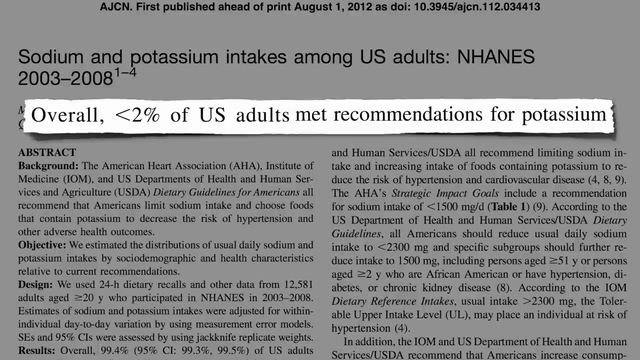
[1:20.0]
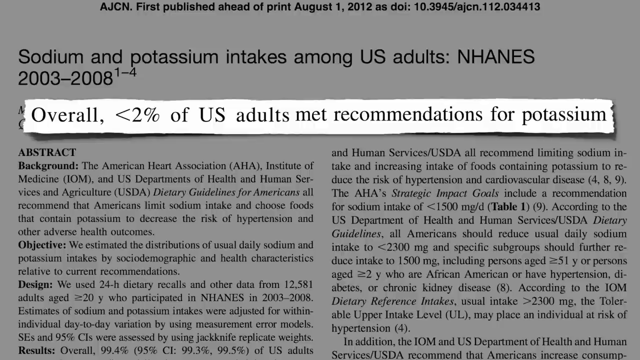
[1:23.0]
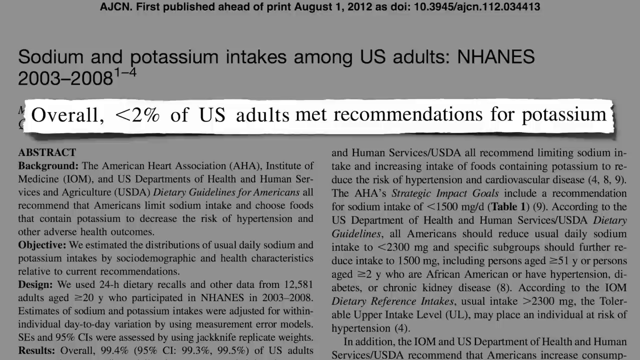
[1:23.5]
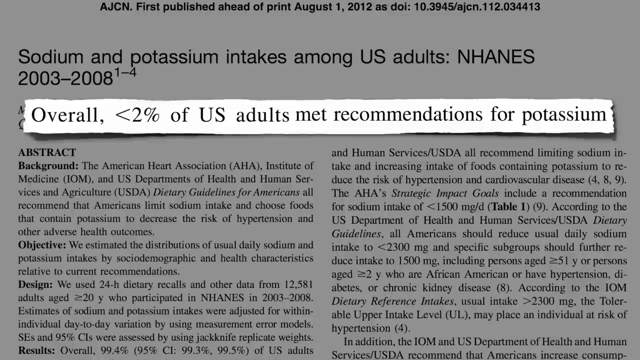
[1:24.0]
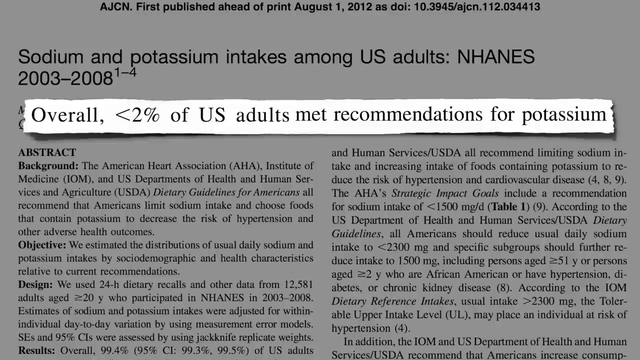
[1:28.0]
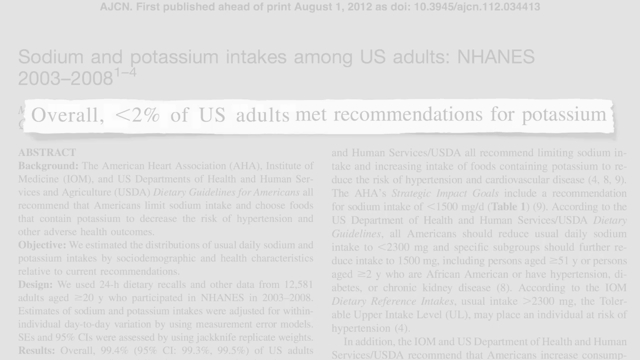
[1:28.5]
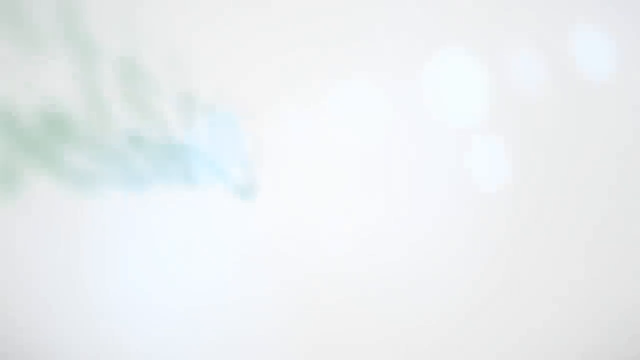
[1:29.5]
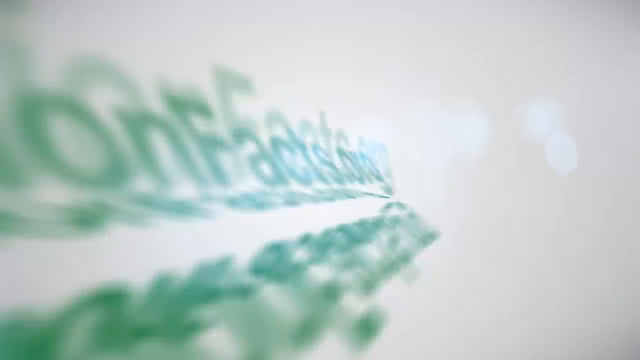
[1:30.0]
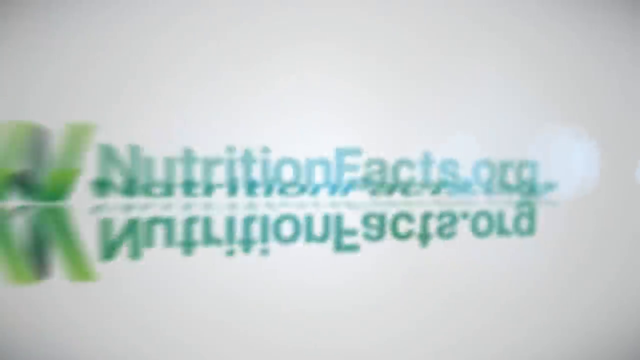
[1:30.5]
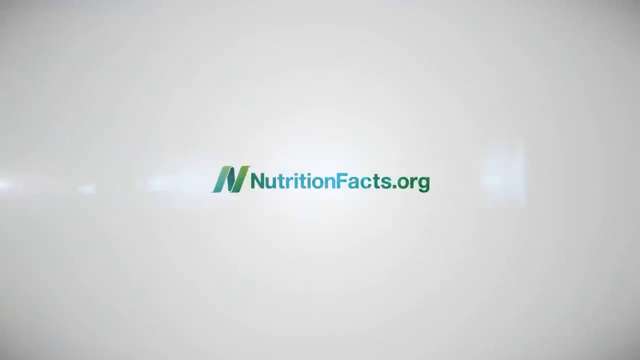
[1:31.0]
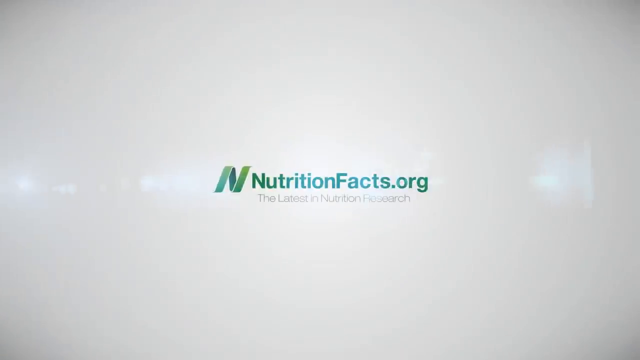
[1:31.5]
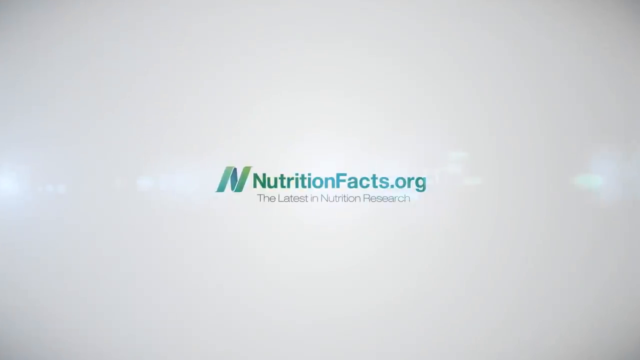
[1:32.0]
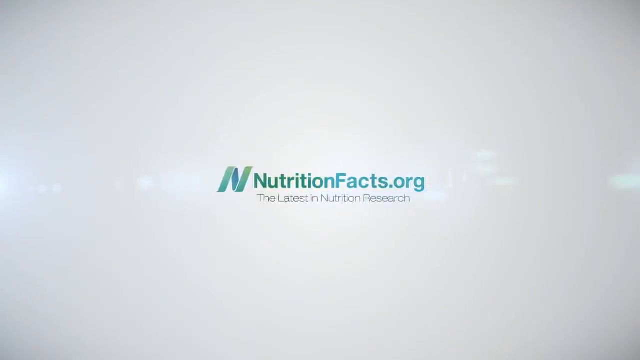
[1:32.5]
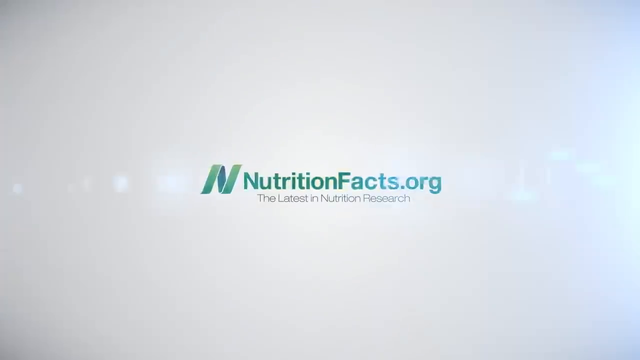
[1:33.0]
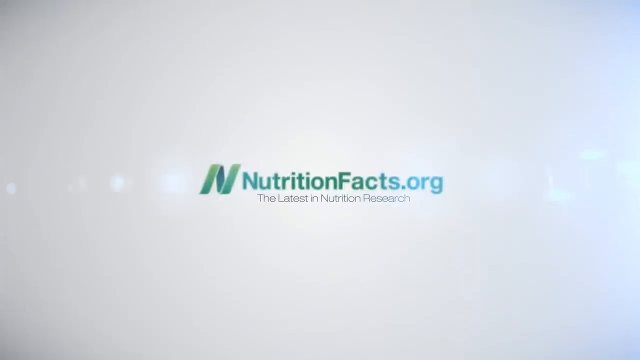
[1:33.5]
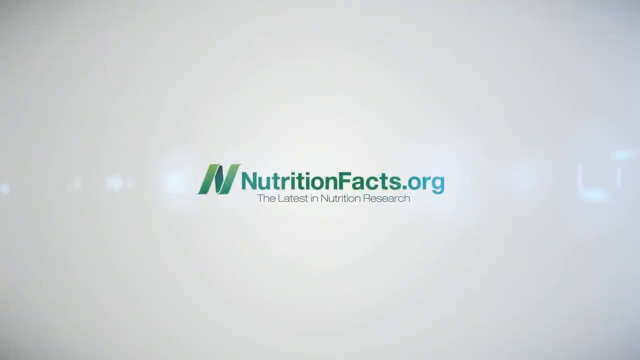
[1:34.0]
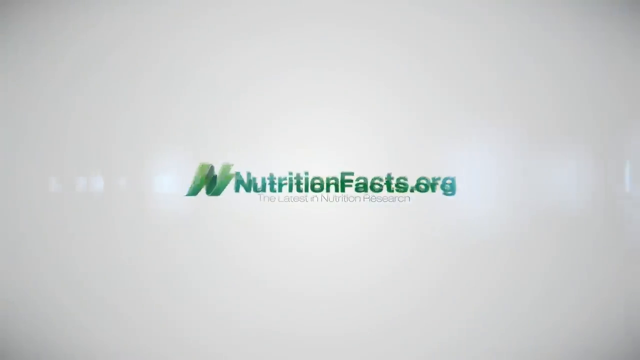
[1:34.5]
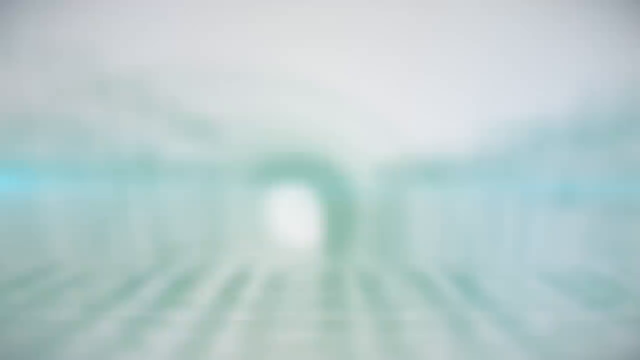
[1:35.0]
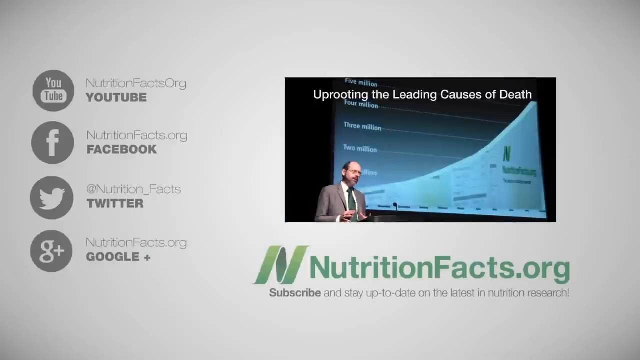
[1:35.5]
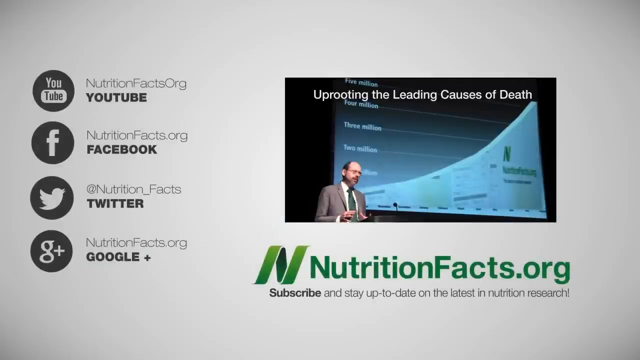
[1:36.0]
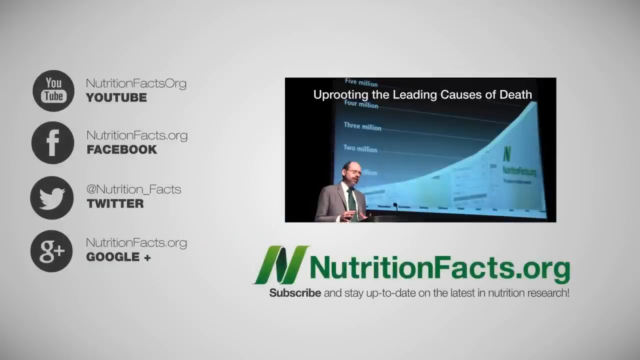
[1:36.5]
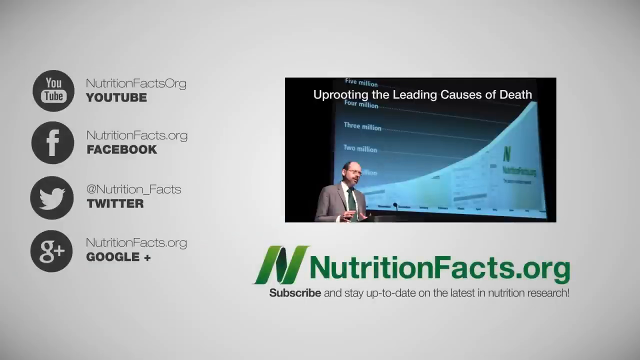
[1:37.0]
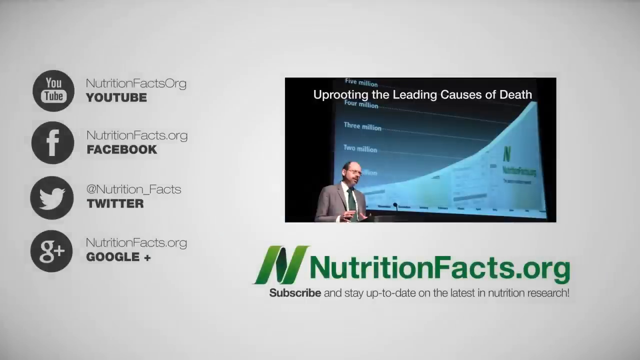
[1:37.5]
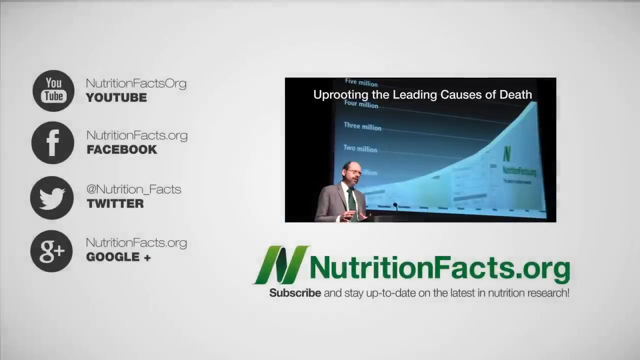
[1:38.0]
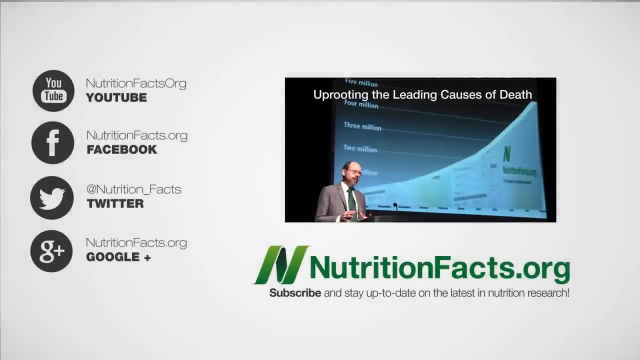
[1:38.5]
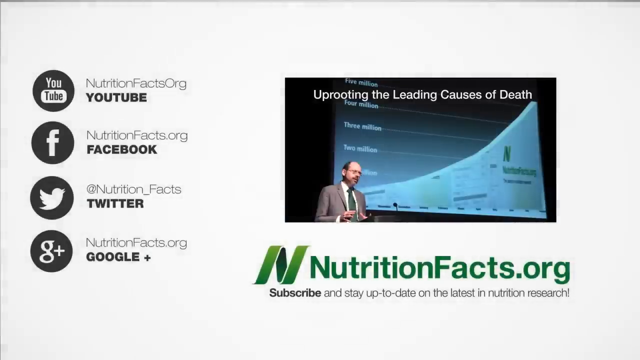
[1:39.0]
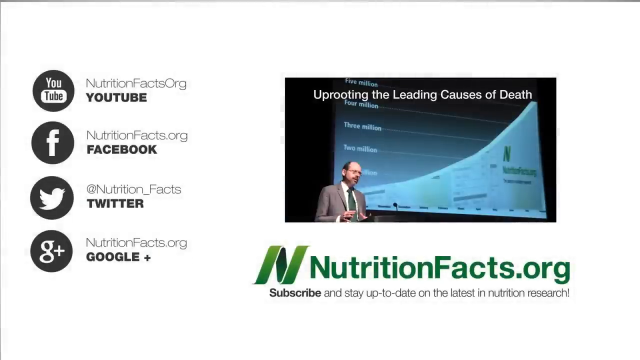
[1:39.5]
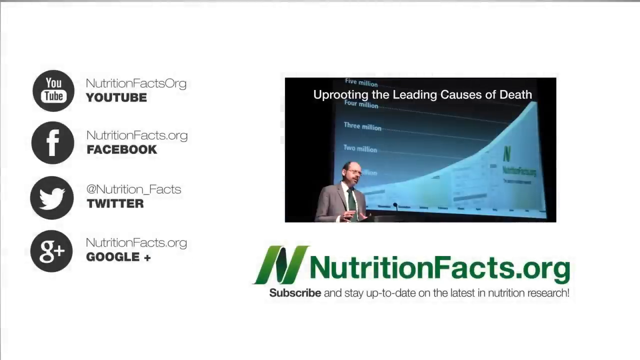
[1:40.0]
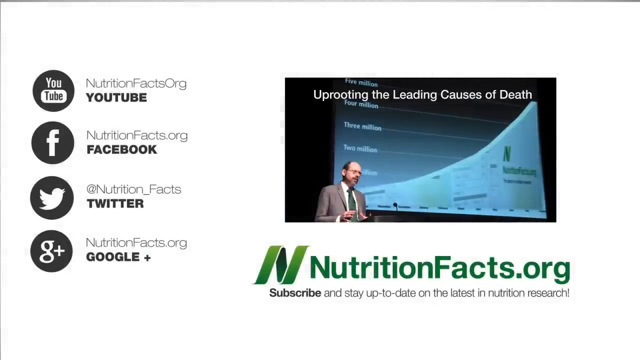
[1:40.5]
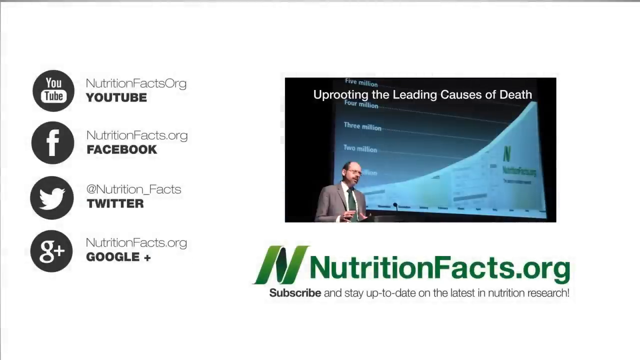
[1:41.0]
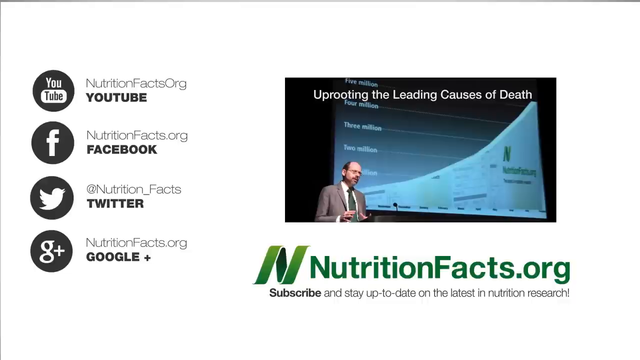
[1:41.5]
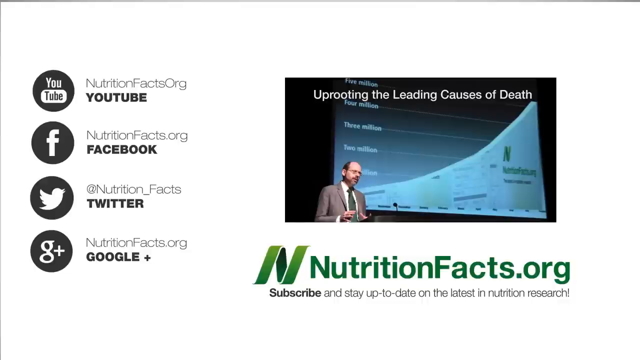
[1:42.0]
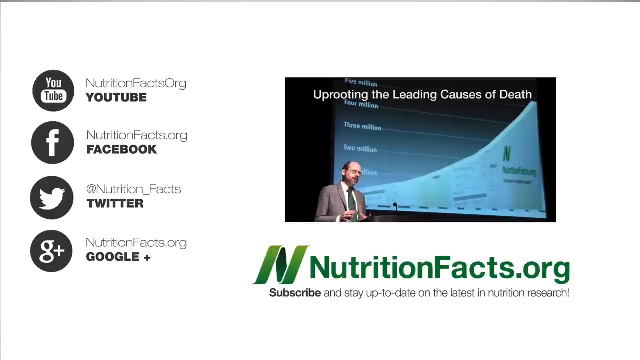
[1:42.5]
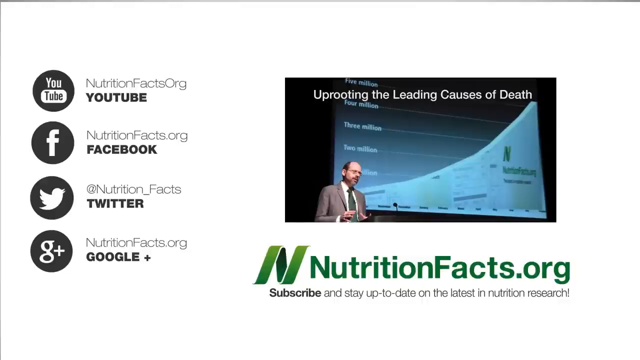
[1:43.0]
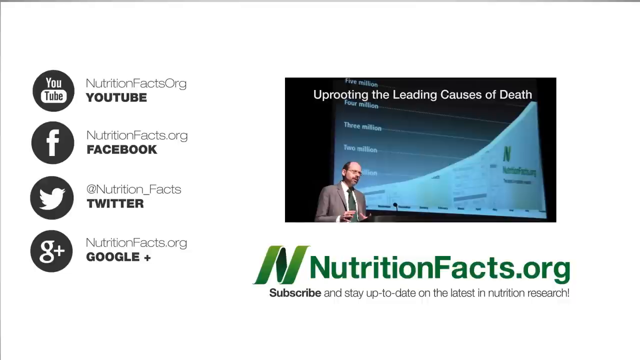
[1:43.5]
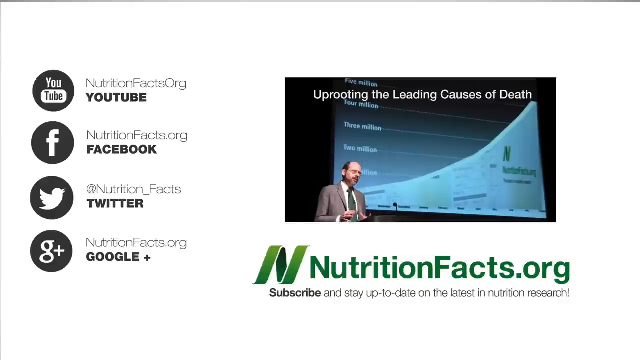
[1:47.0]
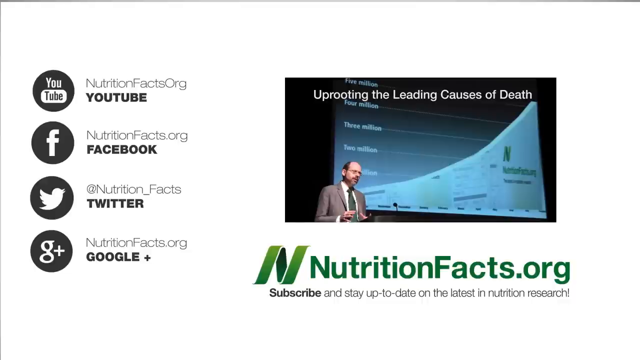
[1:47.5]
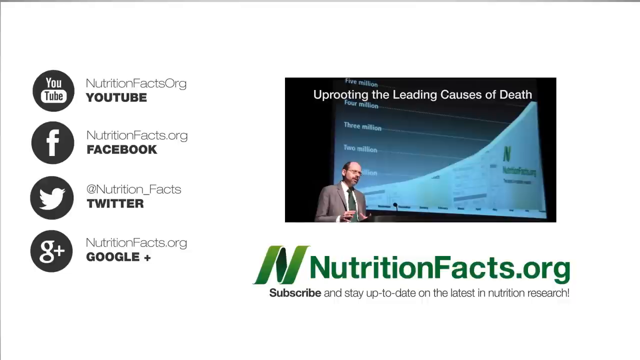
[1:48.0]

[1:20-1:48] The video is still focused on the article about U.S. adults not meeting the recommendations for potassium. It then goes back to the NutritionFacts.org page, written in green font, with "the latest in nutrition research" beneath it in small grey letters on a grey background. The next screen is a page of information listing the YouTube channel link, NutritionFacts.org; the Facebook page link, NutritionFacts.org; the Twitter handle, @Nutrition_Facts; and Google+, NutritionFacts.org. On the right-hand side of the screen is a small image of a video titled "uprooting the leading cause of death." Underneath, in green font, is "NutritionFacts.org," and beneath that, "Subscribe and stay up-to-date on the latest in nutrition research."